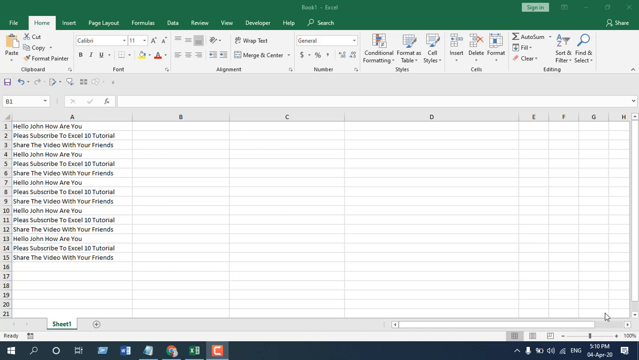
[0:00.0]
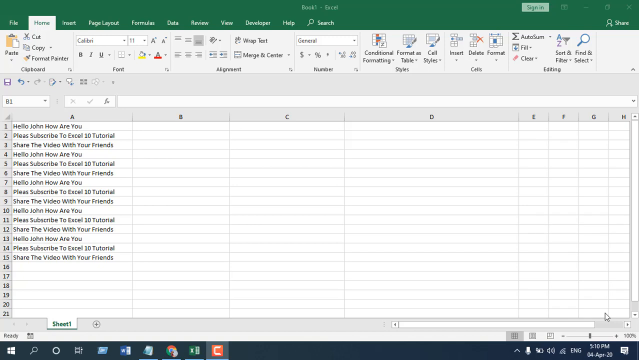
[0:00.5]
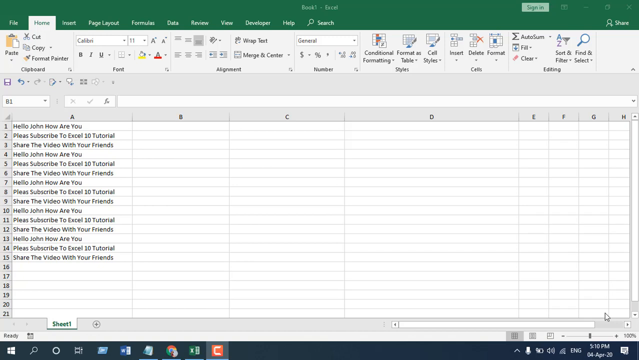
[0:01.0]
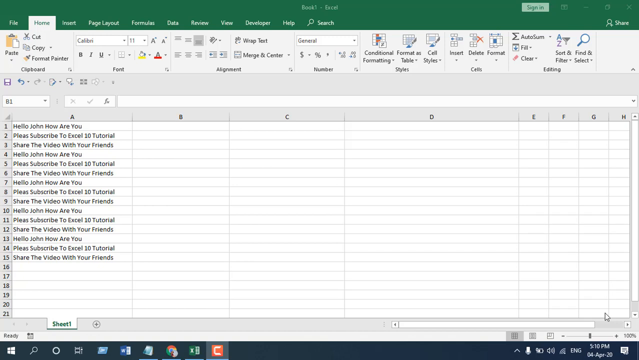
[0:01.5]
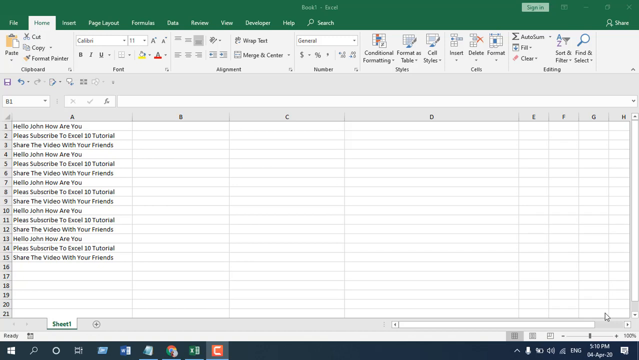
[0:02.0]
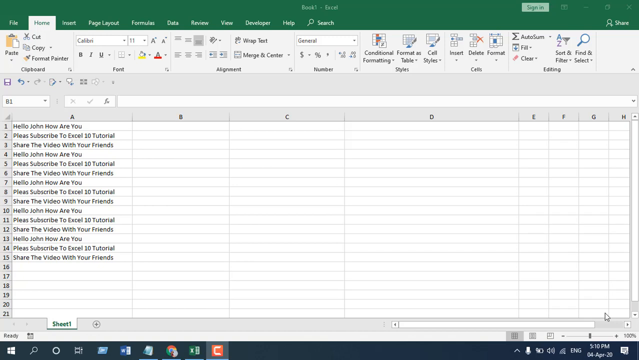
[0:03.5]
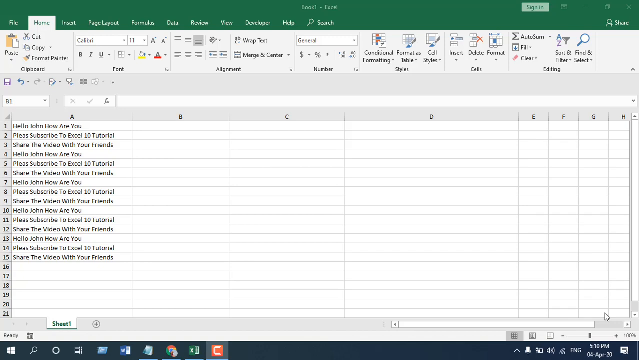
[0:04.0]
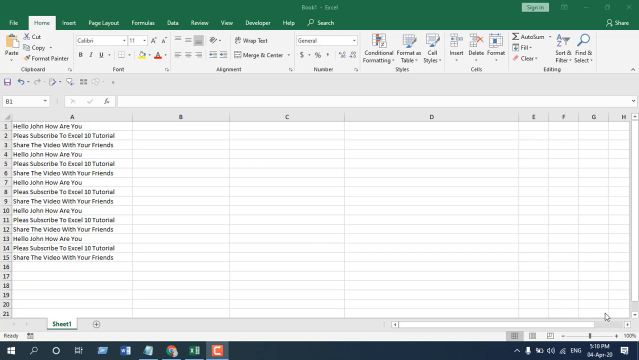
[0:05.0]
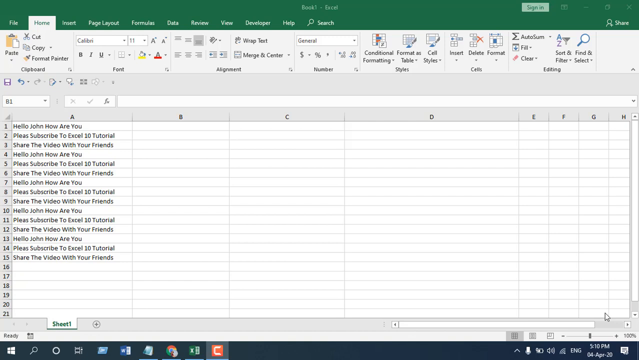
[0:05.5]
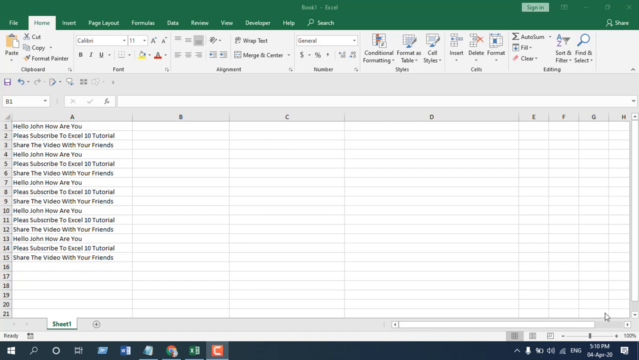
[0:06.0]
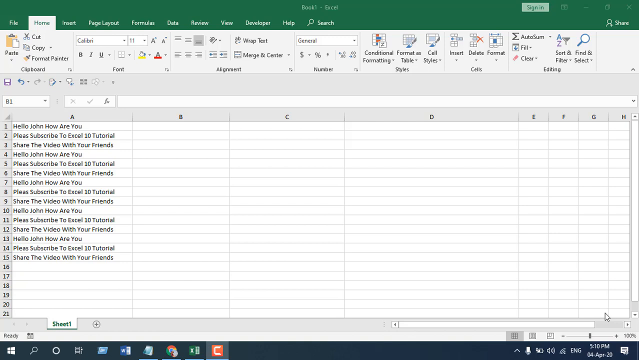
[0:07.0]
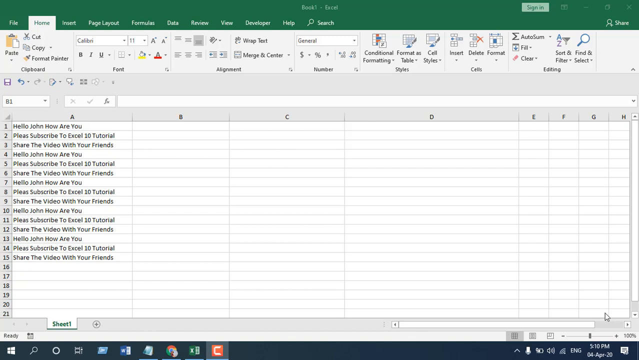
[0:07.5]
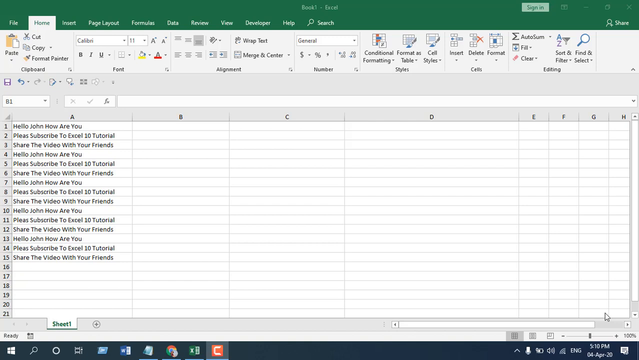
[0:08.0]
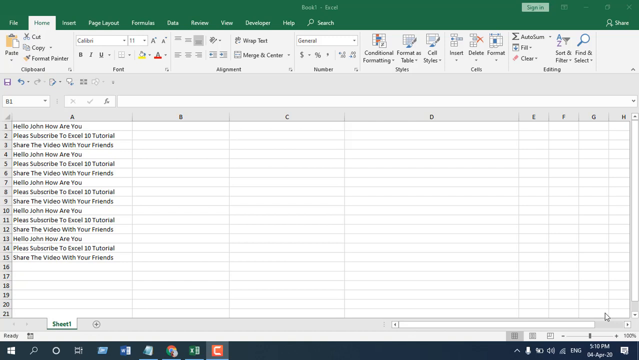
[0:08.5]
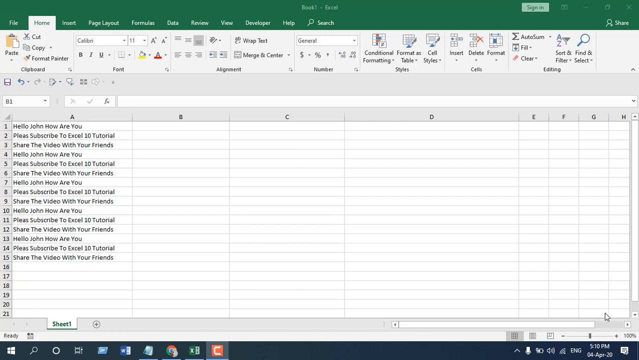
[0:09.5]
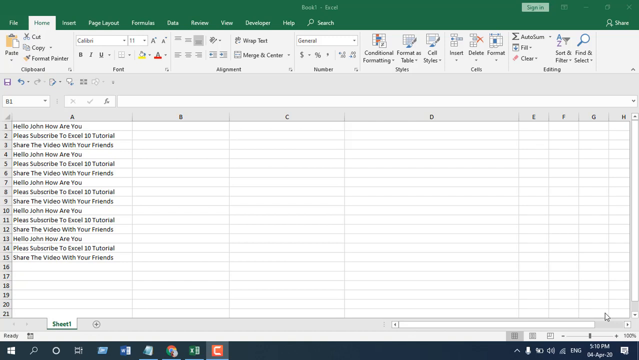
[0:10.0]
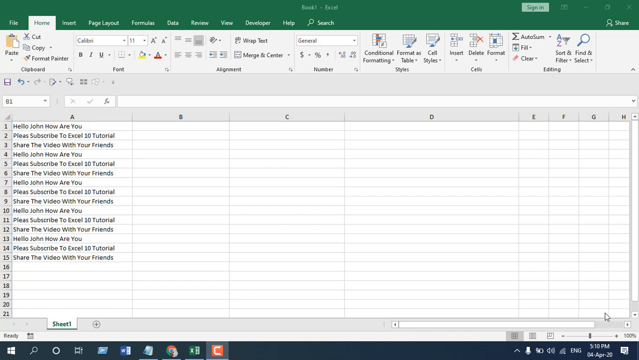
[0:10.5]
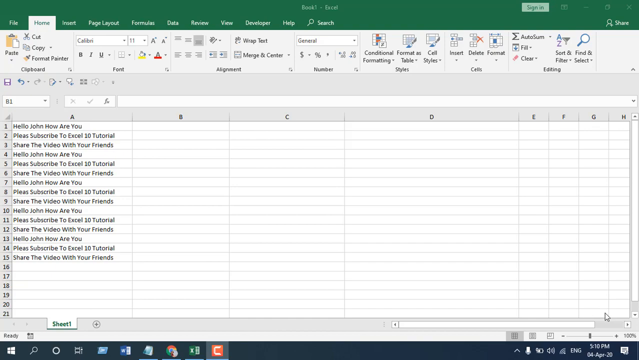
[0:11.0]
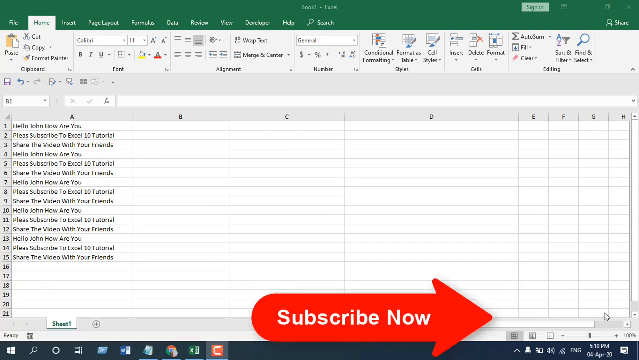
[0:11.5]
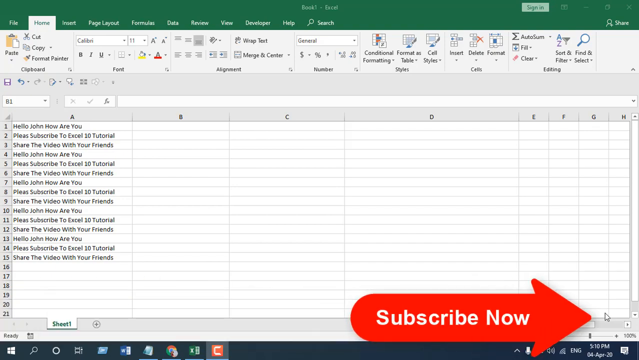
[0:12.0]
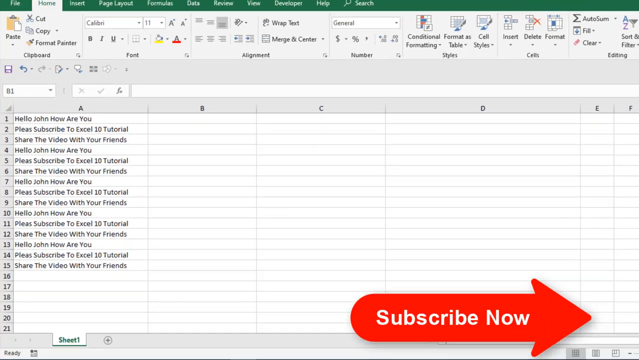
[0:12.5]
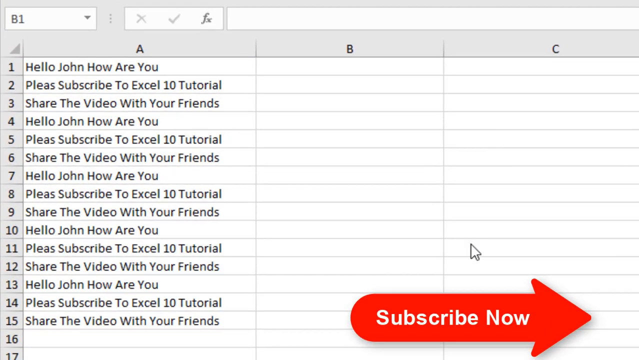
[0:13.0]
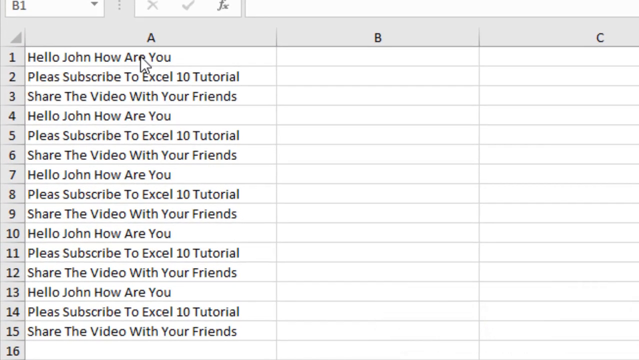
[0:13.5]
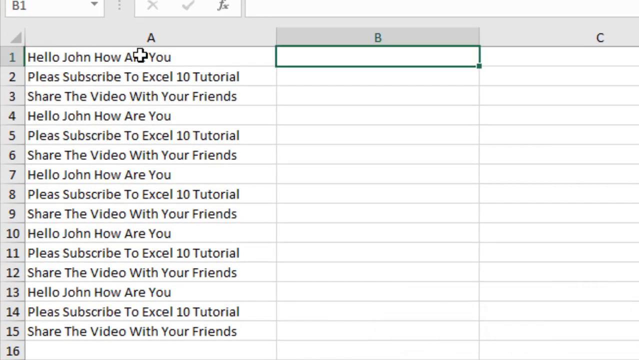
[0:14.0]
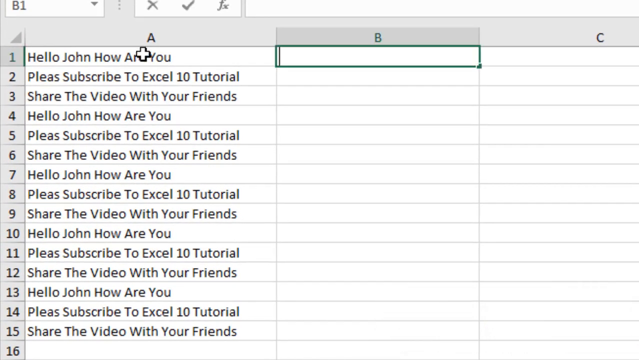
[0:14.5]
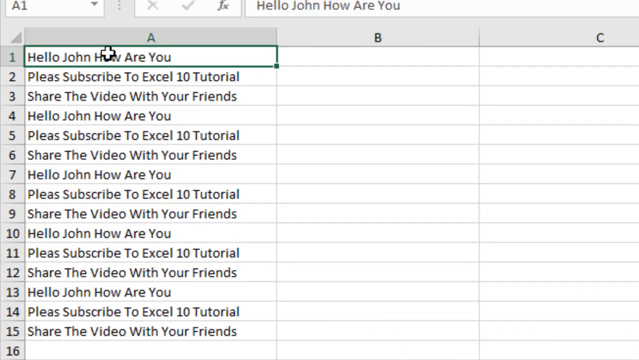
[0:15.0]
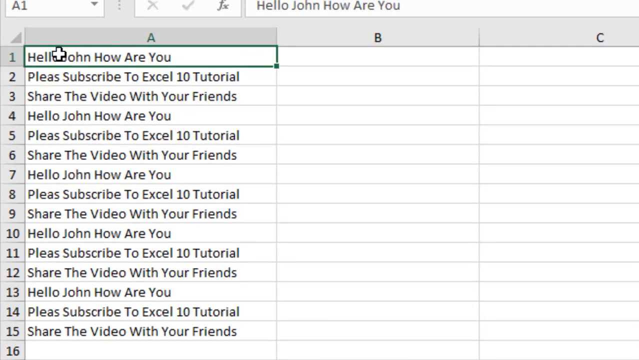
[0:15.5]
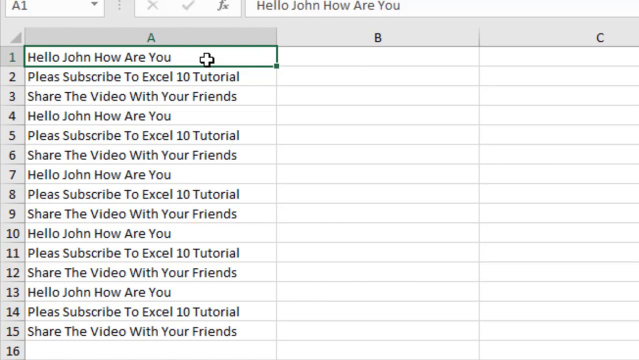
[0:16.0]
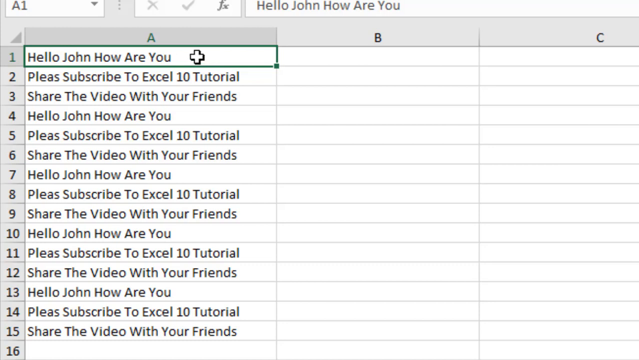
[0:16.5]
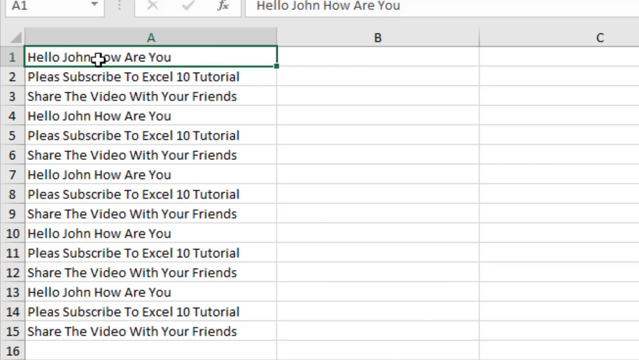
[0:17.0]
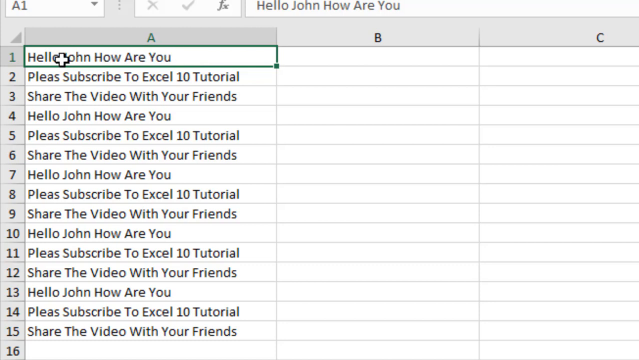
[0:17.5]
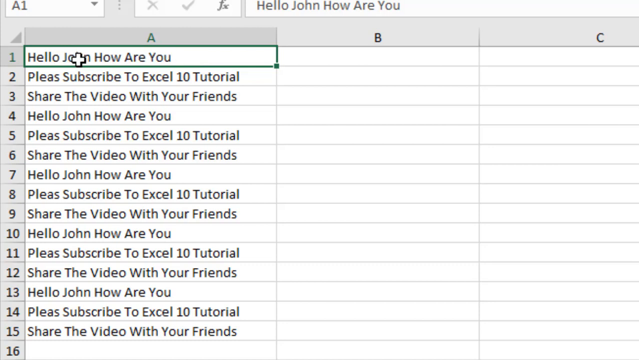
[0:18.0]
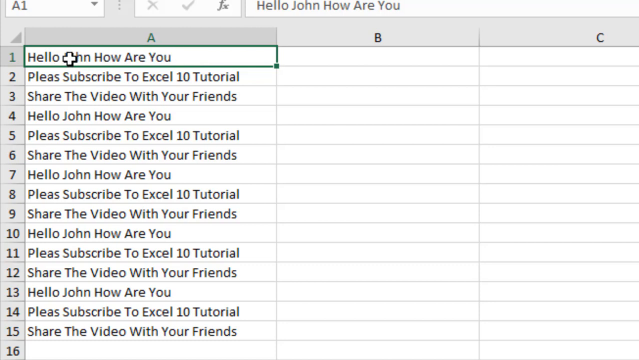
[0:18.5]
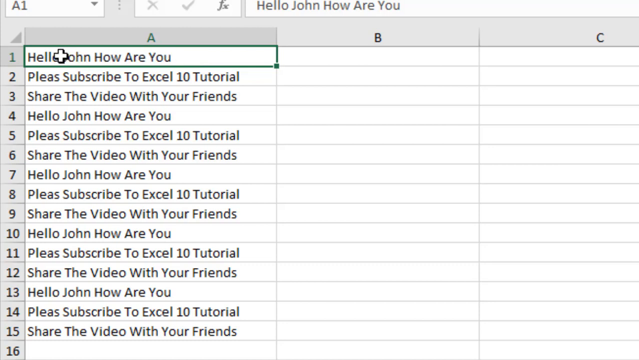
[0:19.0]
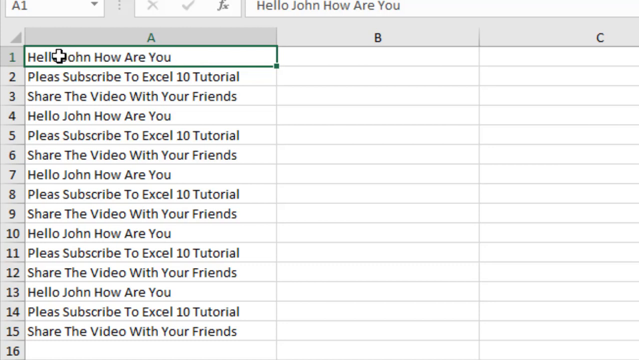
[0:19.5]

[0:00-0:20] Someone is looking at what appears to be a Microsoft Excel sheet with columns A through H. Columns B through H contain no text; only the cells in column A have text, apparently names of certain things from the first to the 15th row. The view zooms in on column A and the first row, cell A1, is clicked. It reads "Hello, John, how are you?"